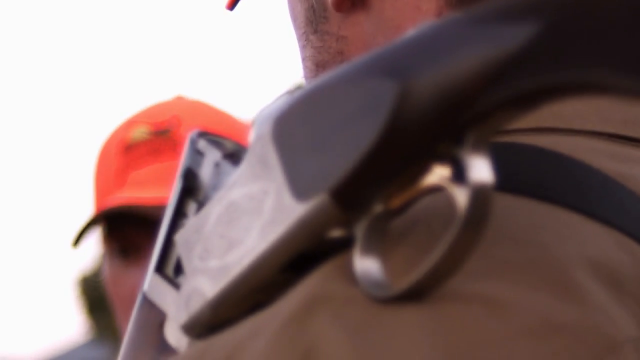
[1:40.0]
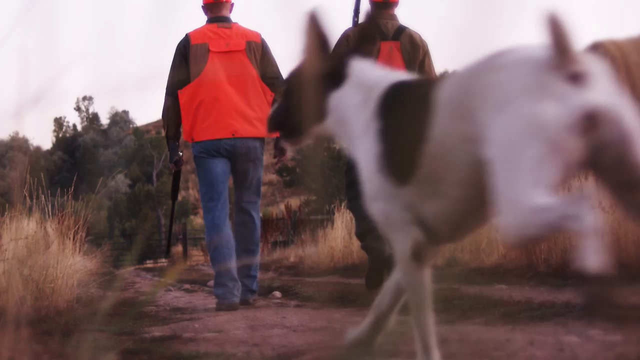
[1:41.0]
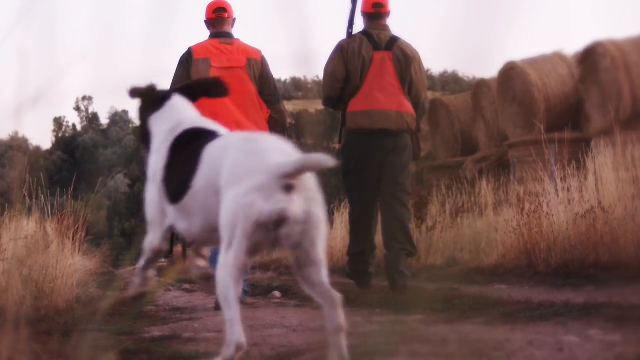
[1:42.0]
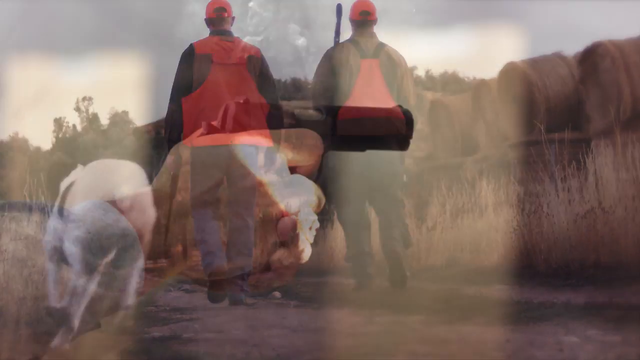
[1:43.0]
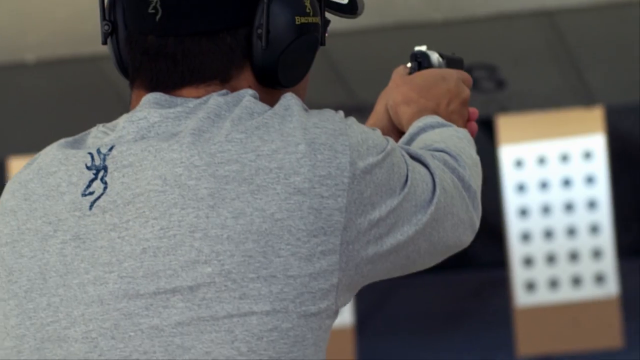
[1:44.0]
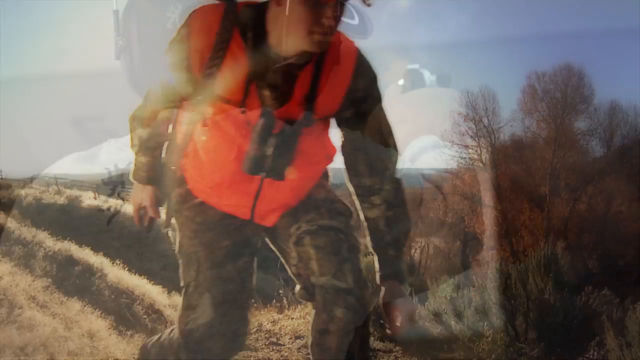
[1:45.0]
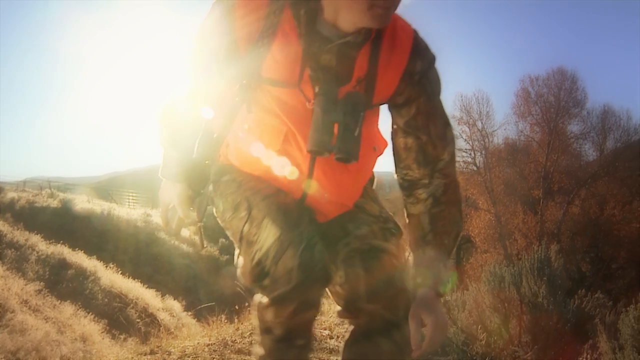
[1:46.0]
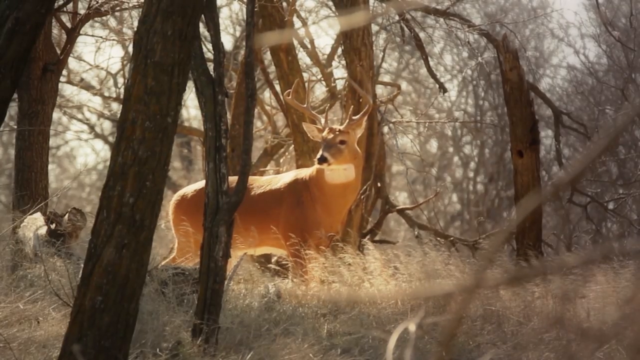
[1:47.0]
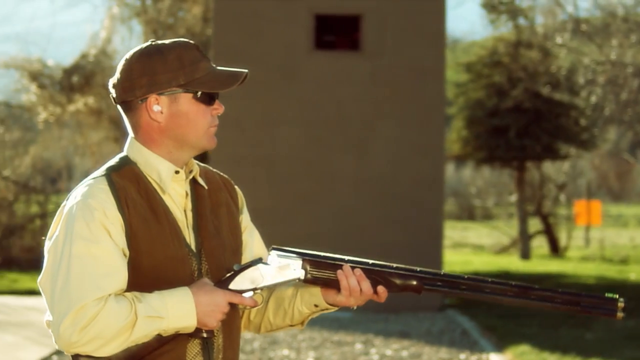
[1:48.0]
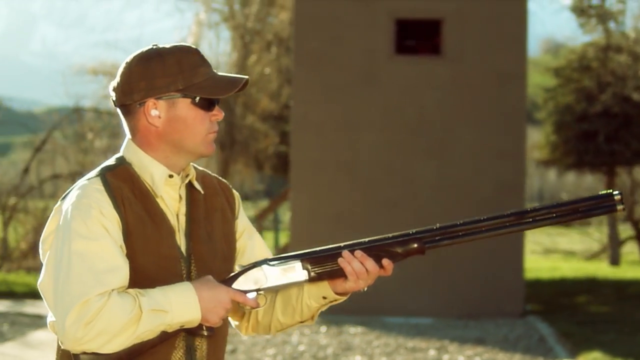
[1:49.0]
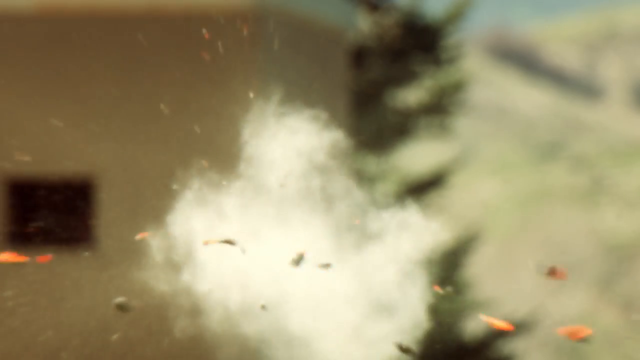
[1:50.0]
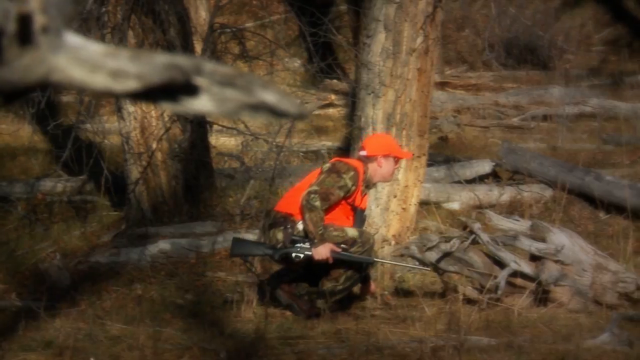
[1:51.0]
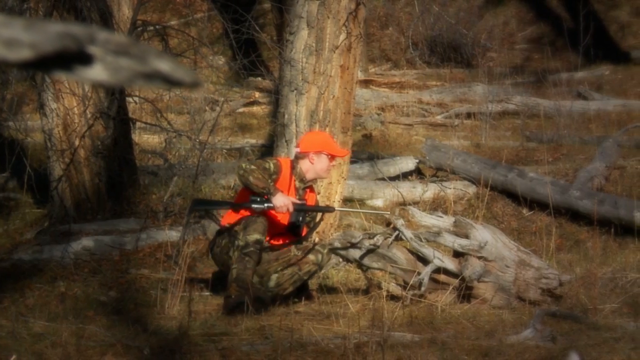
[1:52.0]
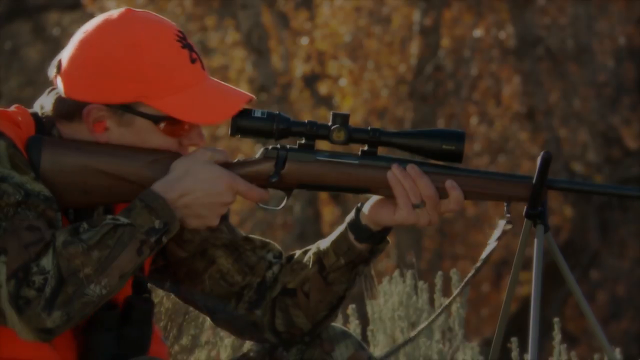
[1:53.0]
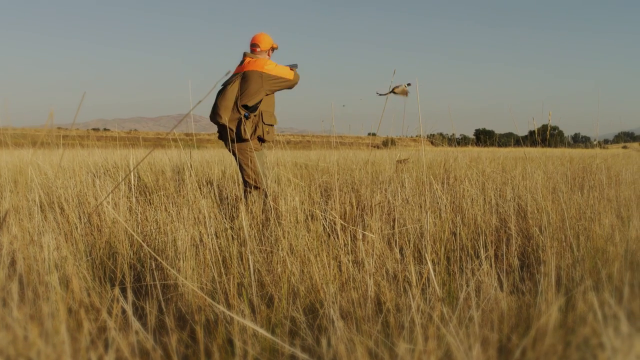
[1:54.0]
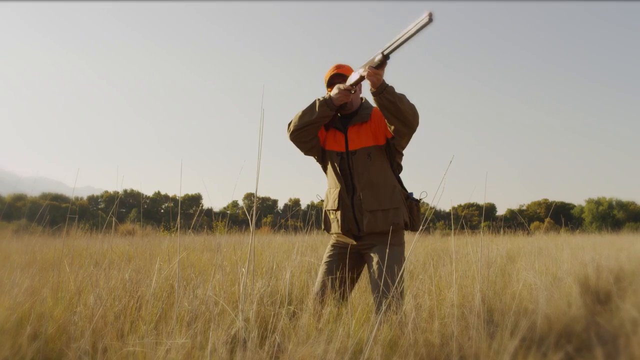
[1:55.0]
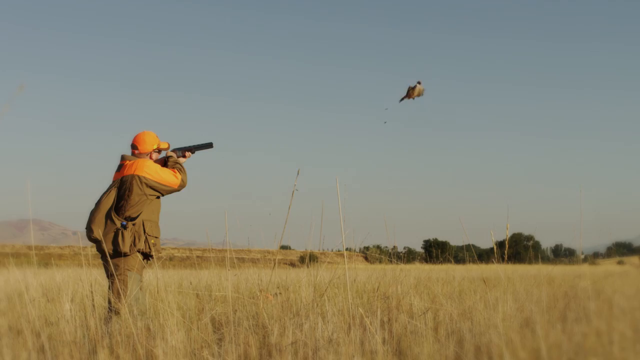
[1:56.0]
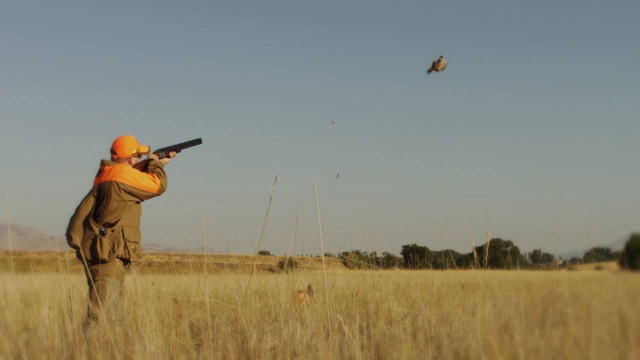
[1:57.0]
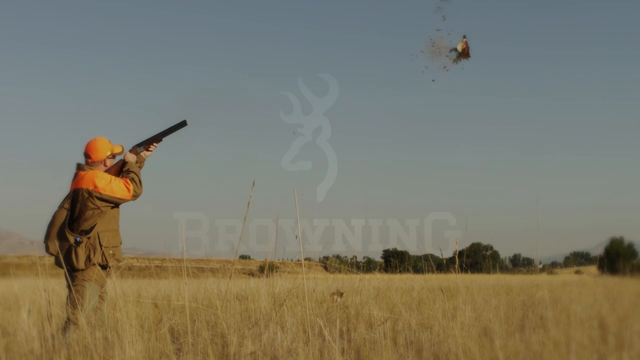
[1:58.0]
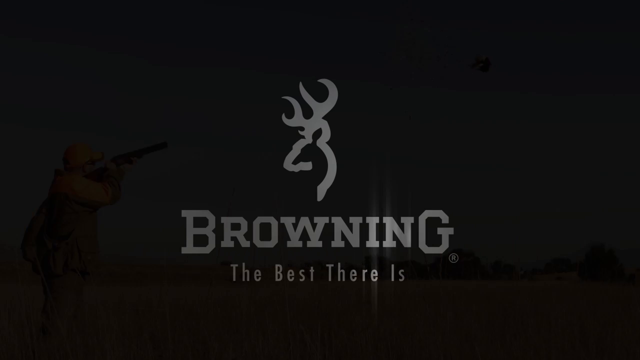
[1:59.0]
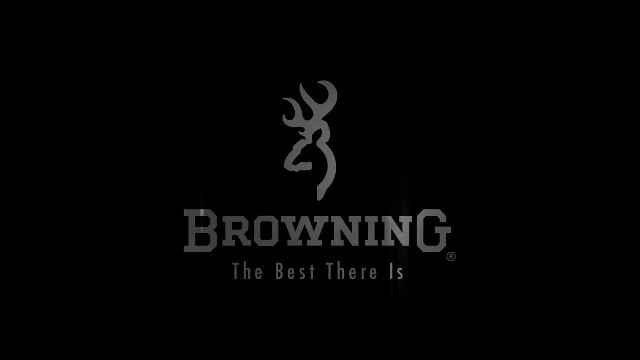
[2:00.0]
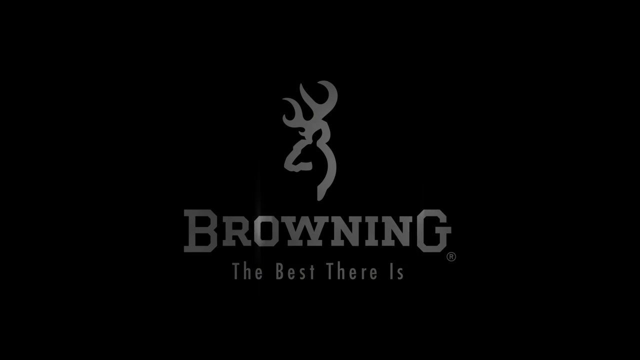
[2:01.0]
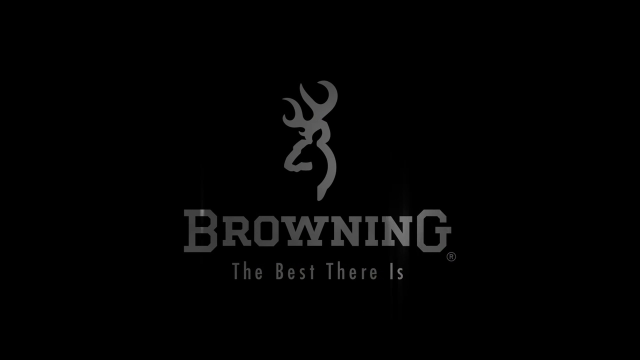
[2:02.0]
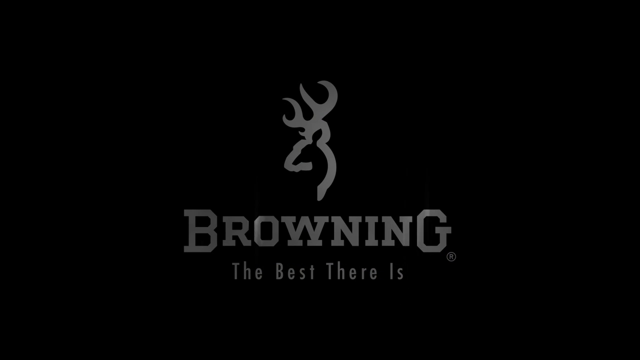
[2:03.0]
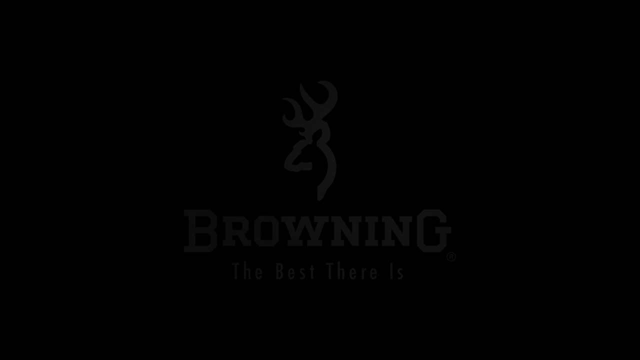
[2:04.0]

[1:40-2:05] A white and black dog runs, and someone at a practice range shoots a revolver at a target some distance away. A hunter walks crouching through the forest, looking around, as the sun shines strongly. A deer that looks like a female looks back, seemingly scared. A man in dark glasses holds a shotgun ready to shoot. A person at the practice range shoots at a plate, hitting it right in the middle. A hunter with a shotgun then shoots at a flying duck and hits it. The Browning logo appears, with a drawing of a deer at the bottom, indicating the video is sponsored by Browning.